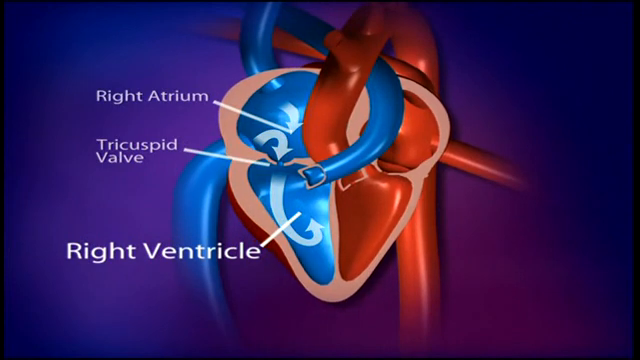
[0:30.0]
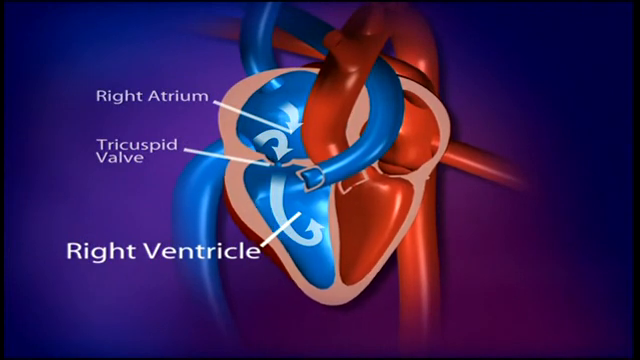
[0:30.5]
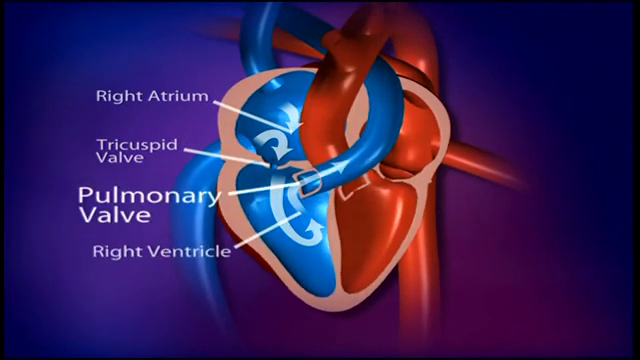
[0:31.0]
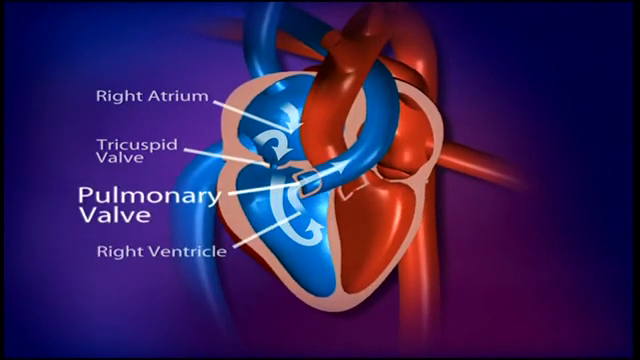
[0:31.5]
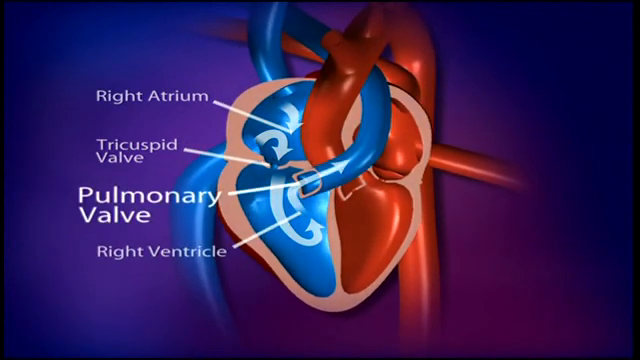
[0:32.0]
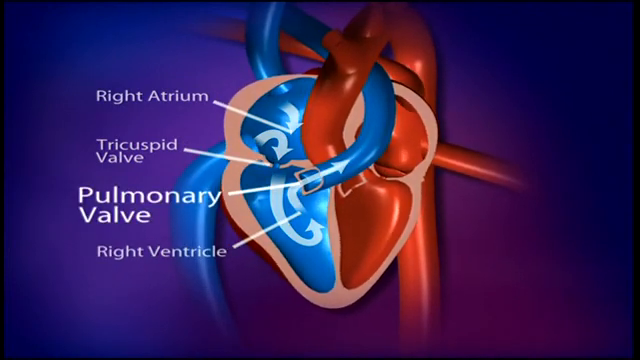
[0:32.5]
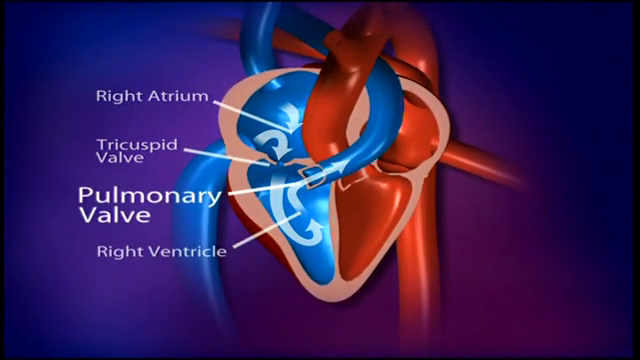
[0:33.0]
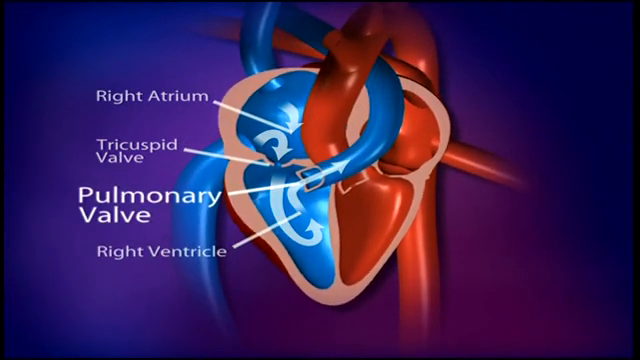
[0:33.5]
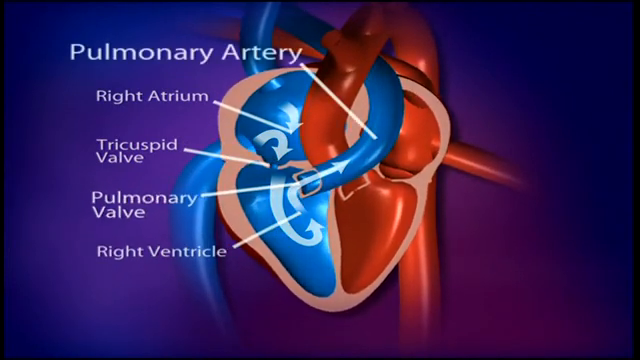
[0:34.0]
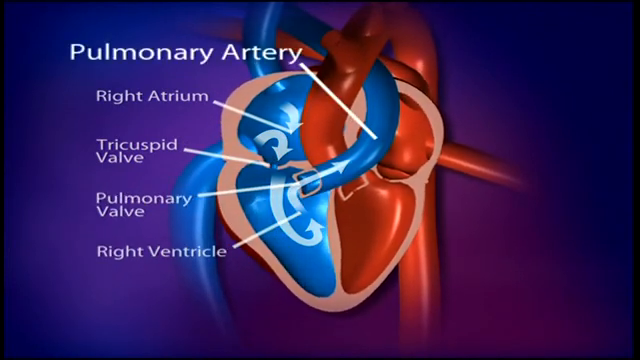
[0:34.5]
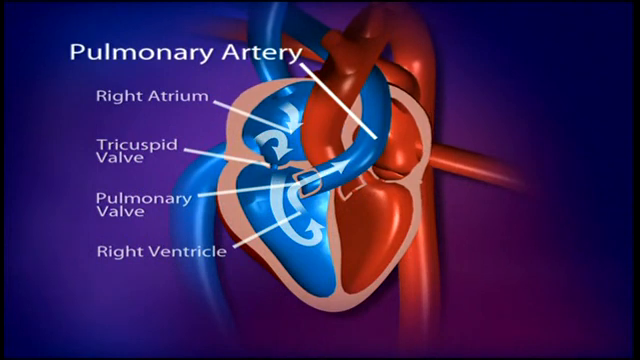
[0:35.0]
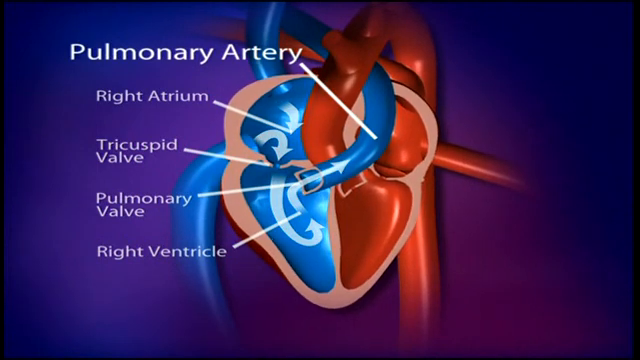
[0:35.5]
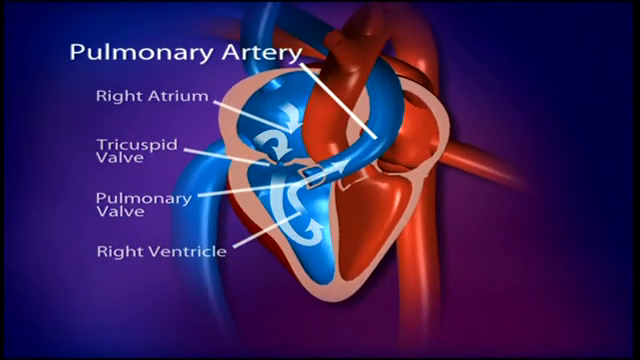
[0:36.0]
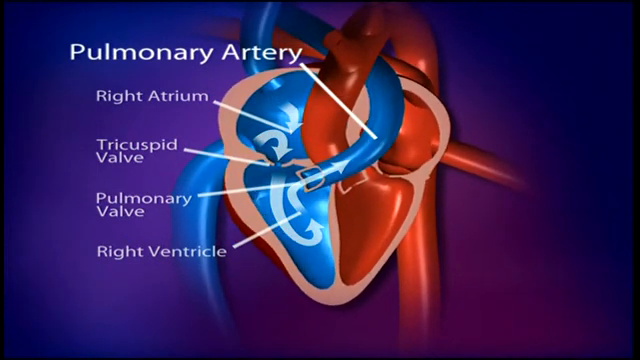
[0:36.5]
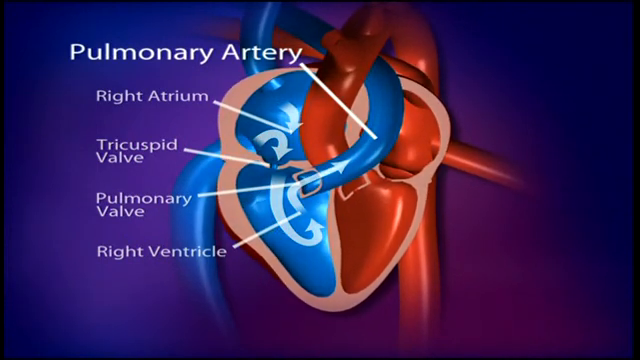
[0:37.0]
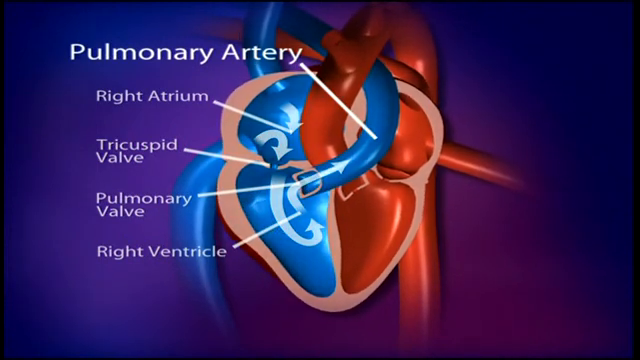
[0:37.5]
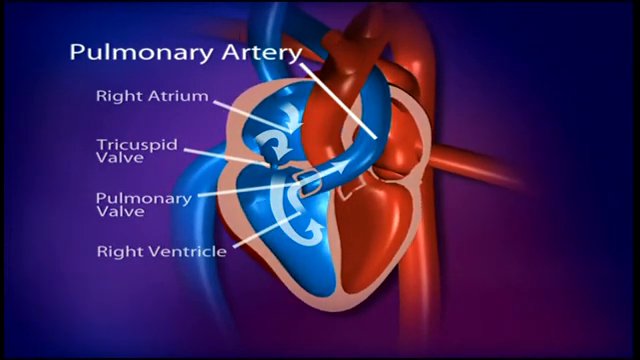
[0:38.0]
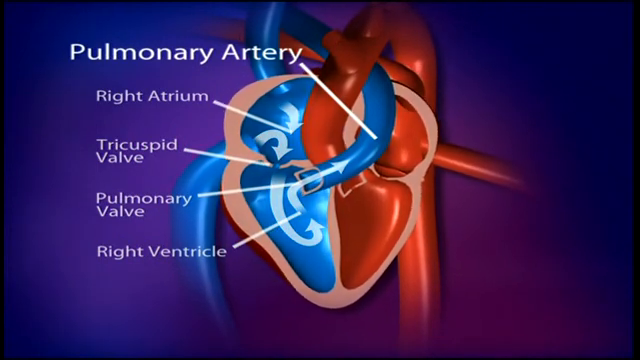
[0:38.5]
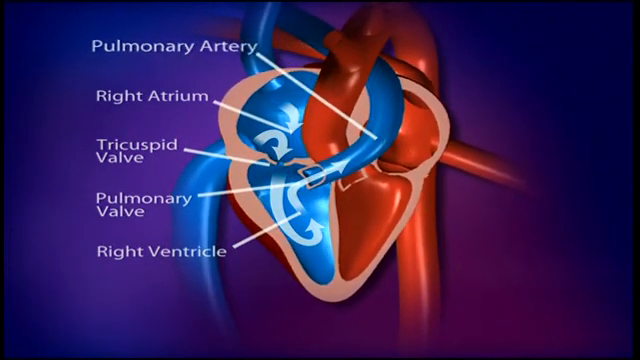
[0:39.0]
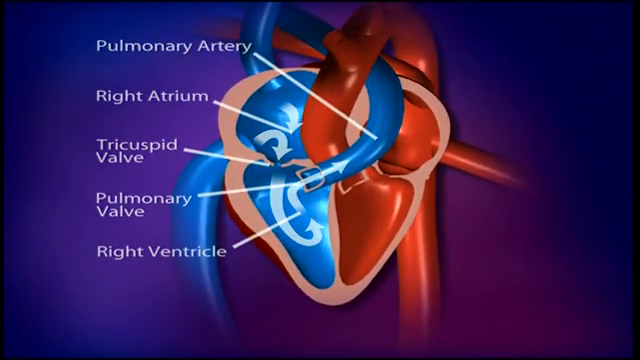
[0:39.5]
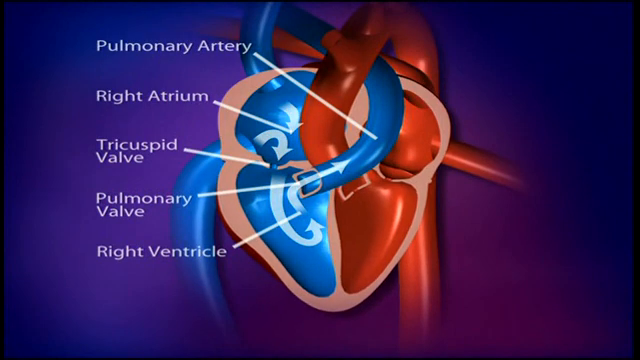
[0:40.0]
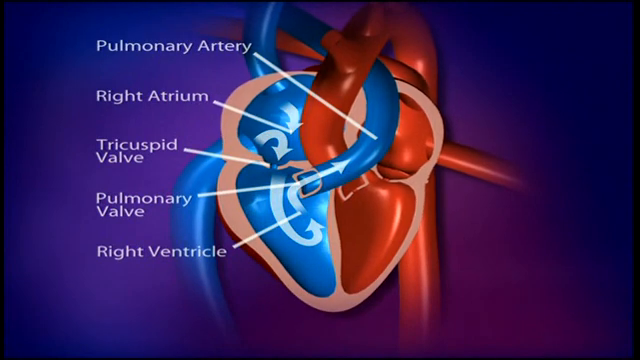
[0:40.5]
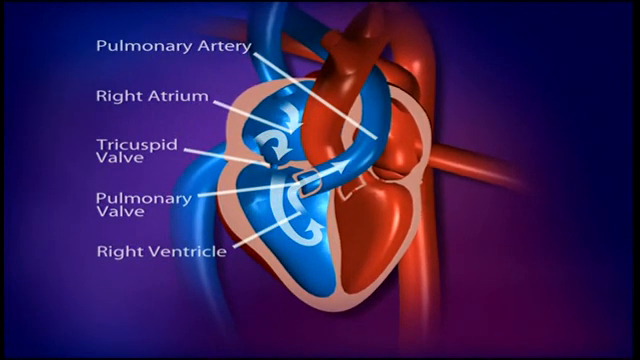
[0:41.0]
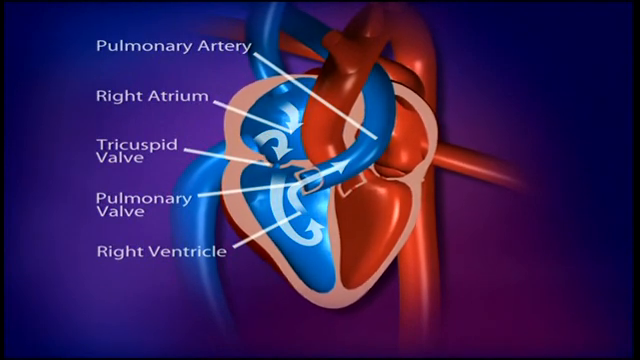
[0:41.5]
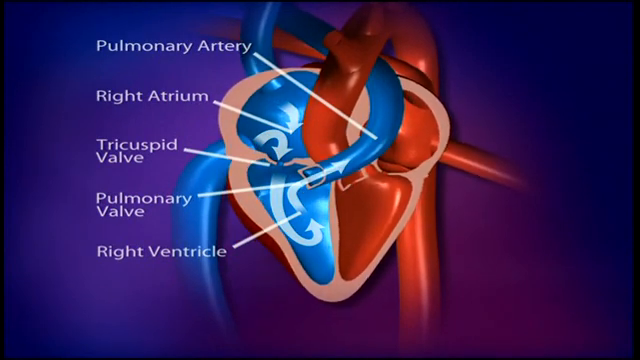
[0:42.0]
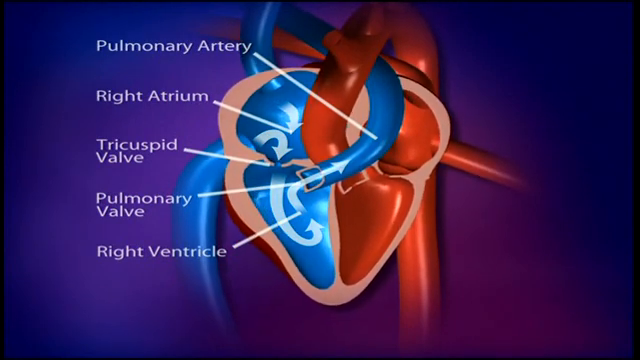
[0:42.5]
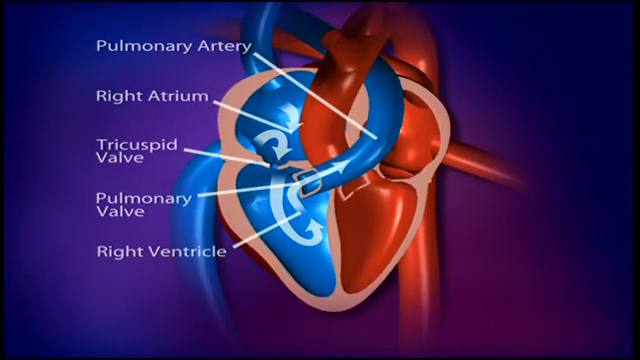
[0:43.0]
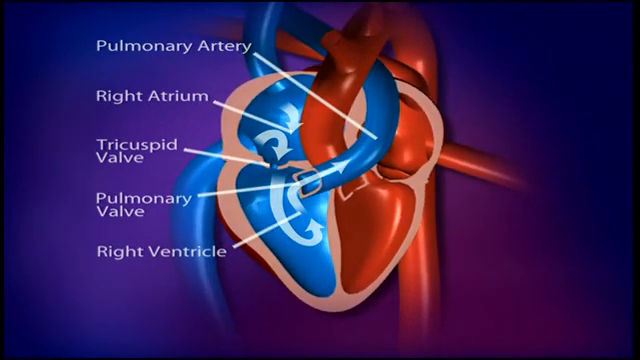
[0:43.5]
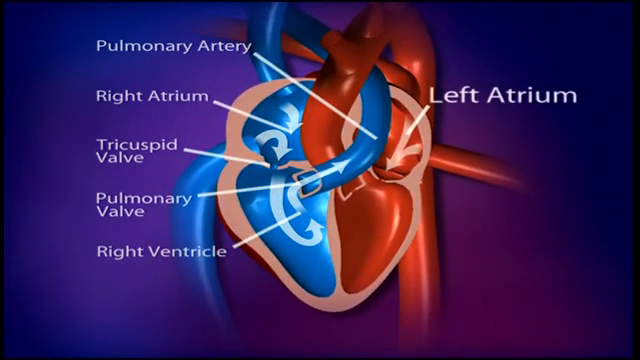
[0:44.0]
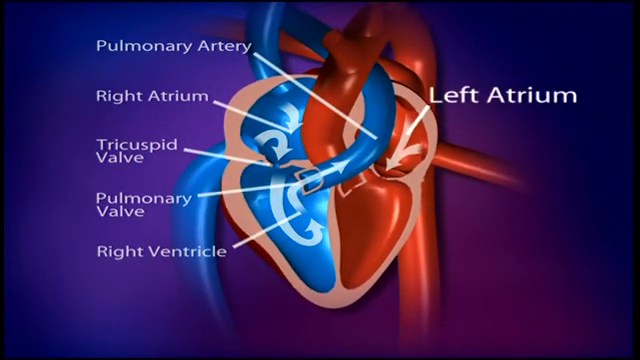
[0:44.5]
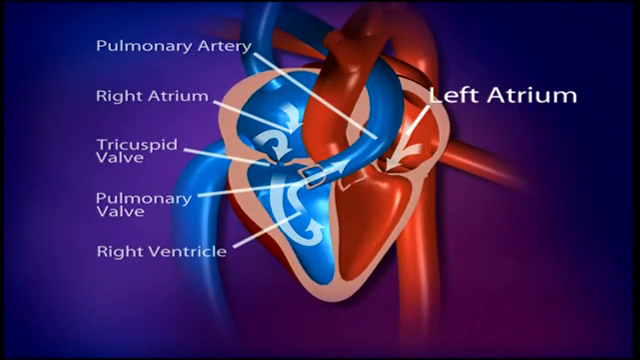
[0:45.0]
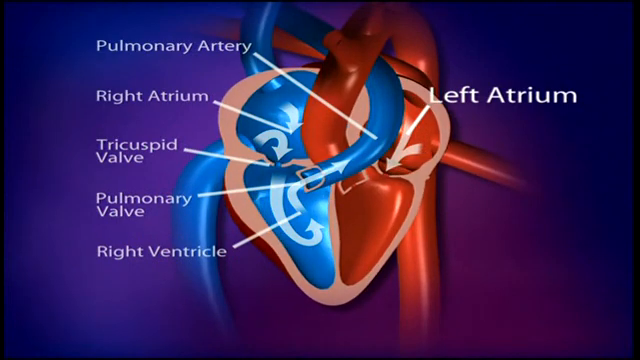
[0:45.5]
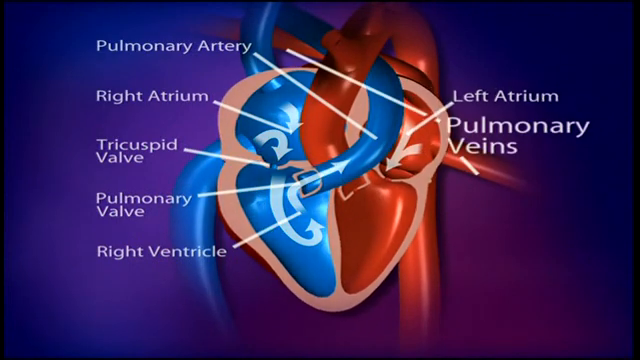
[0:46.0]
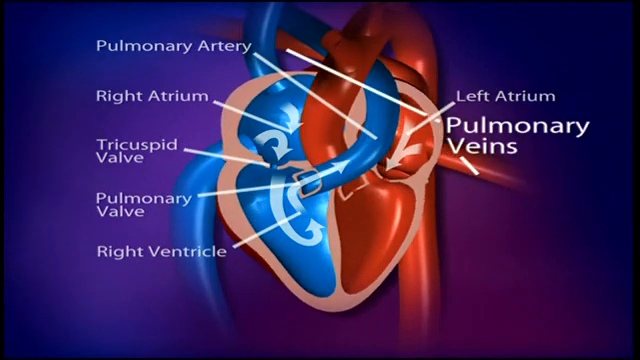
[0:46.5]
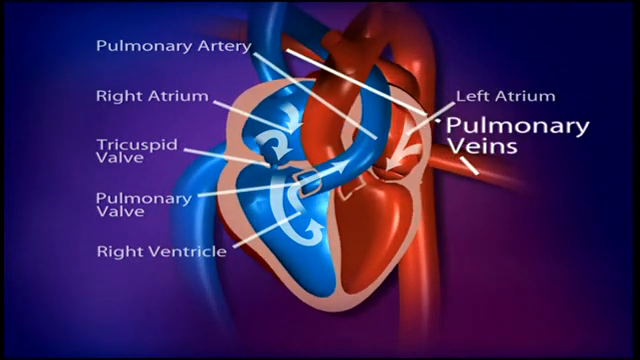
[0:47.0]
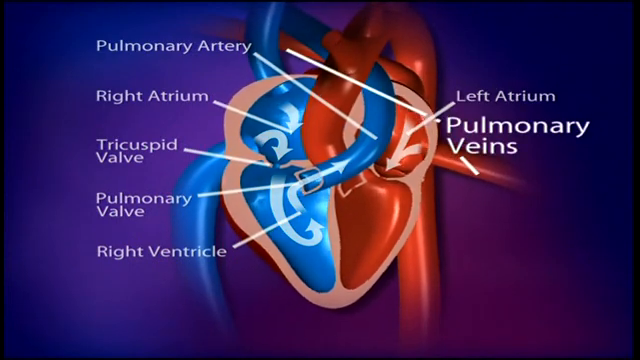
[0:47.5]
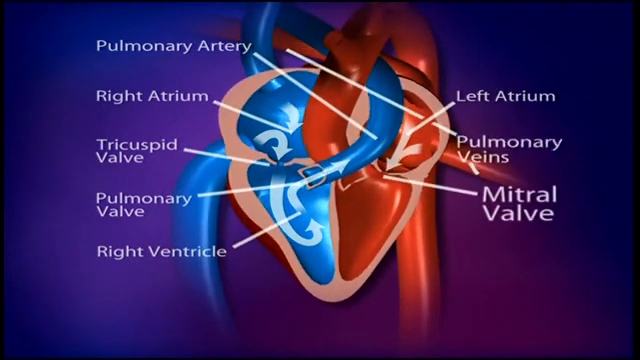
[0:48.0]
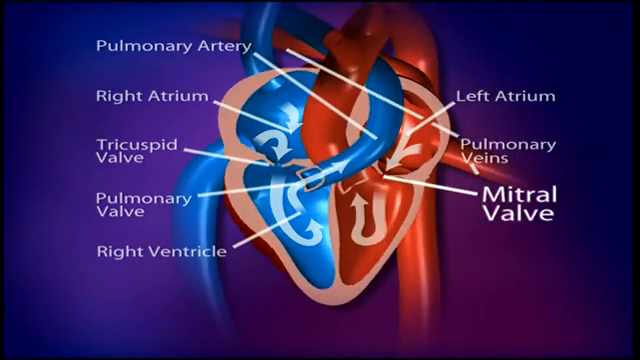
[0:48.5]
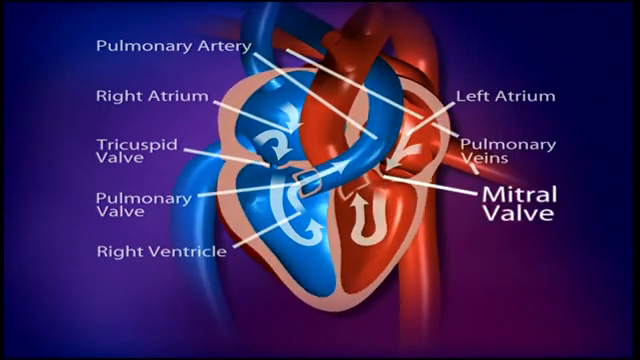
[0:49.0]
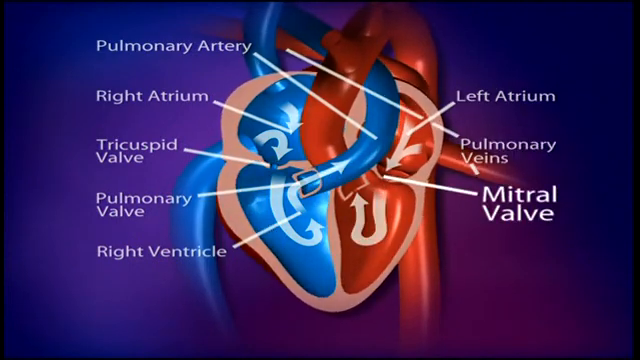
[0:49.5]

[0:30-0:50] The labeled heart diagram continues with the other side of the heart. The left atrium, the mitral valve, the aortic valve, the pulmonary valve and the left ventricle are pointed out. The aortic valve continues into the aorta. The heart is making a motion, beating and constantly moving.